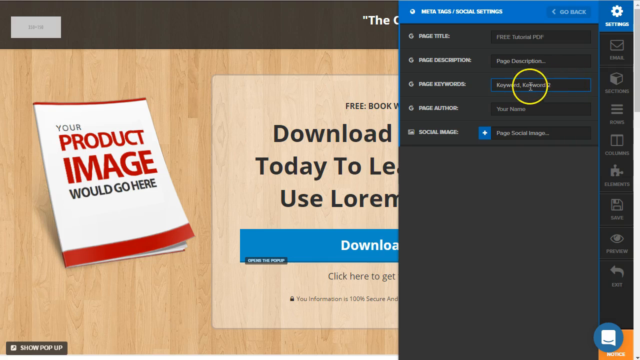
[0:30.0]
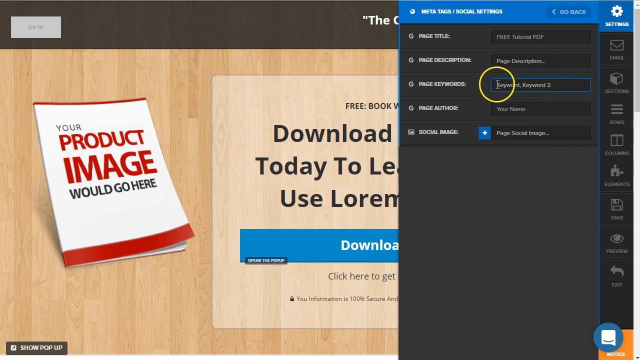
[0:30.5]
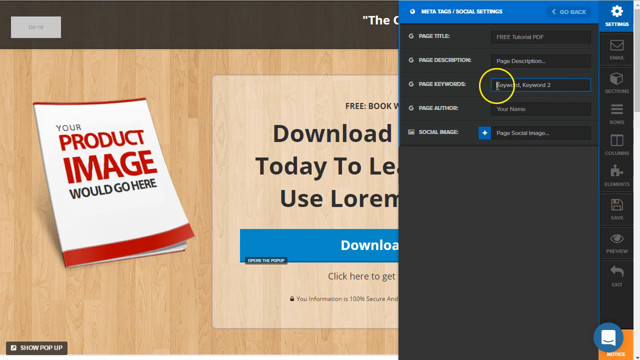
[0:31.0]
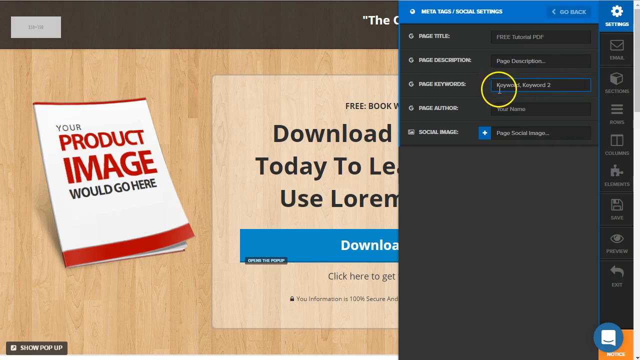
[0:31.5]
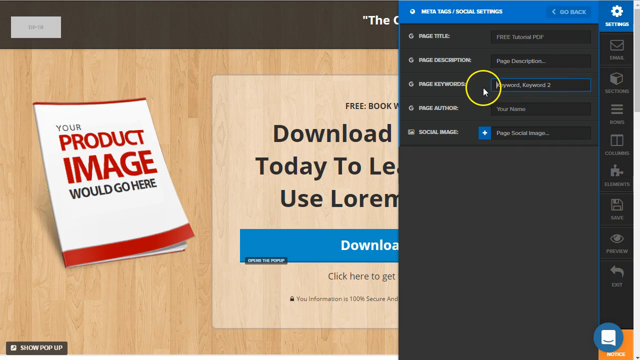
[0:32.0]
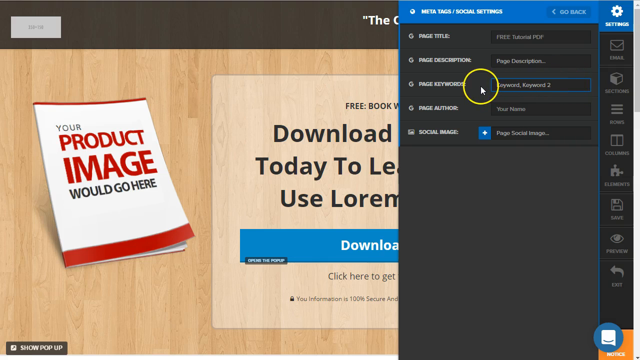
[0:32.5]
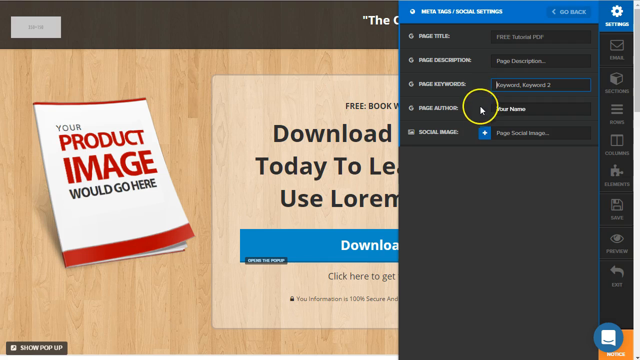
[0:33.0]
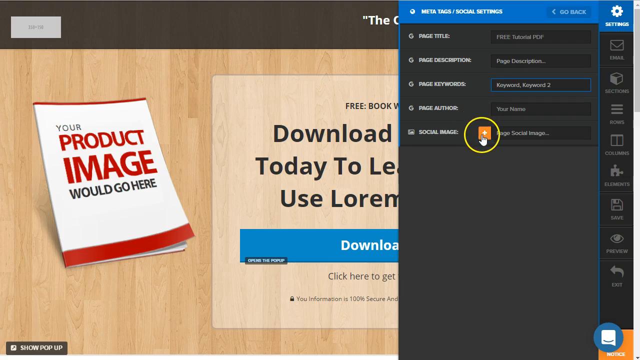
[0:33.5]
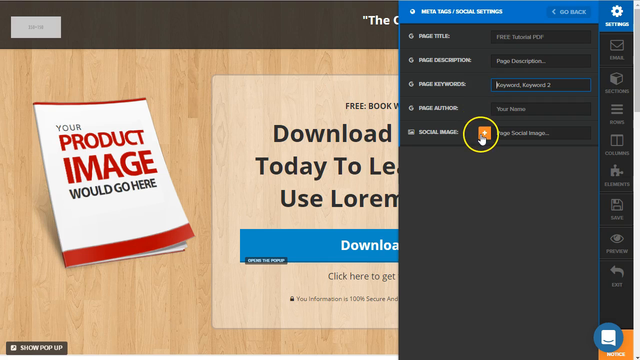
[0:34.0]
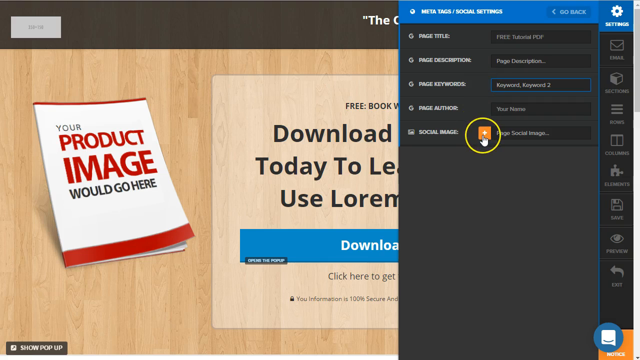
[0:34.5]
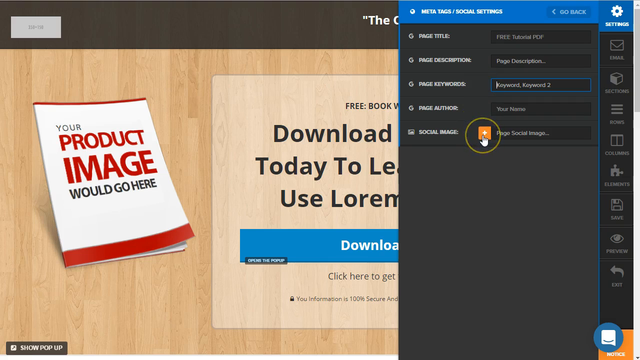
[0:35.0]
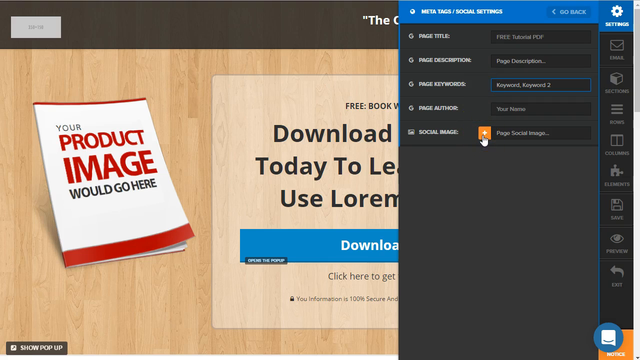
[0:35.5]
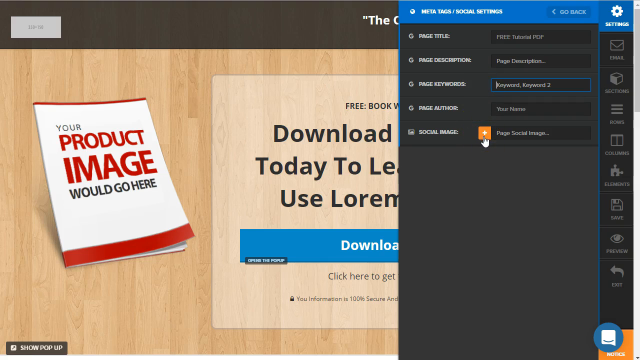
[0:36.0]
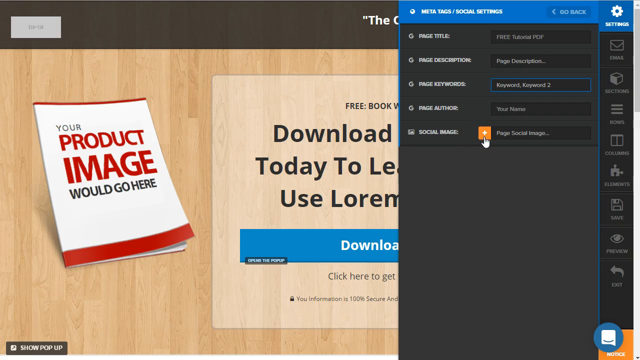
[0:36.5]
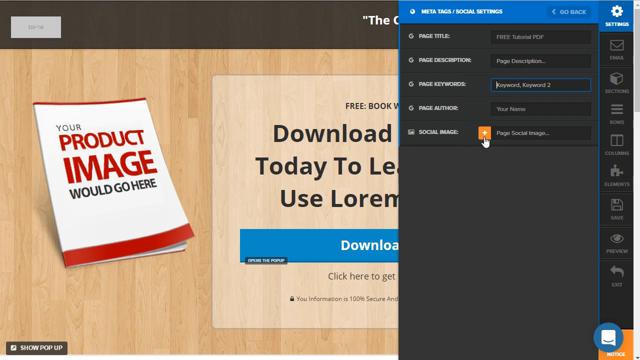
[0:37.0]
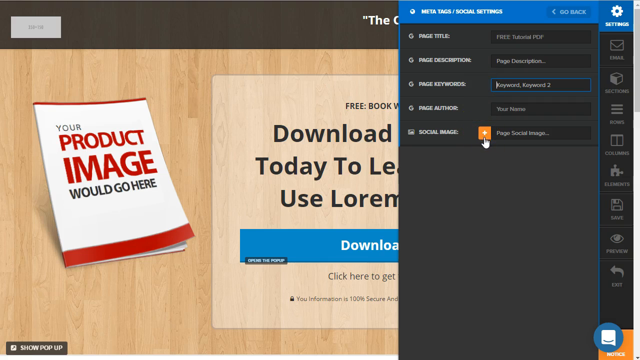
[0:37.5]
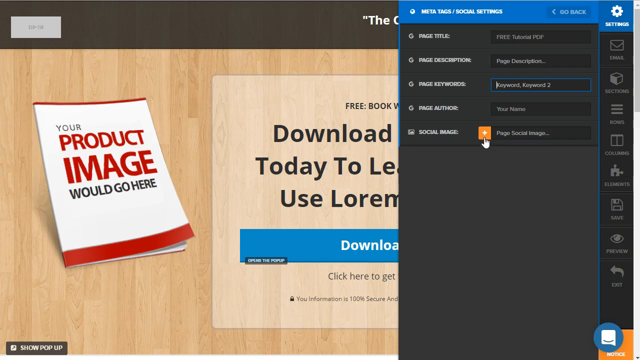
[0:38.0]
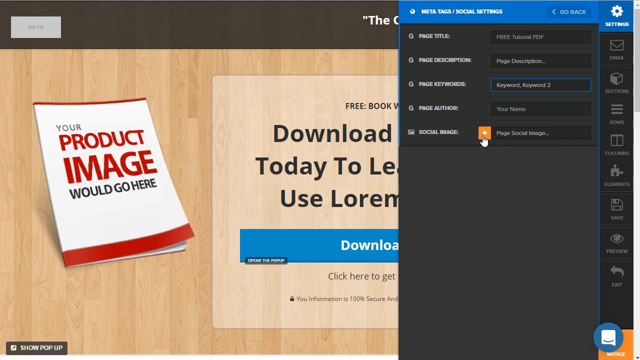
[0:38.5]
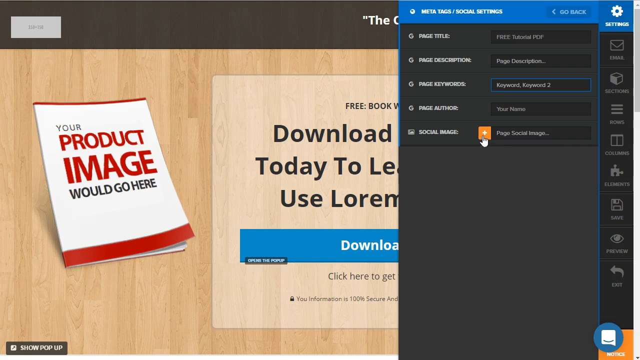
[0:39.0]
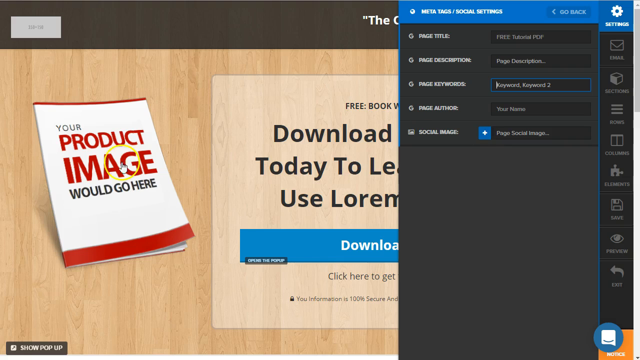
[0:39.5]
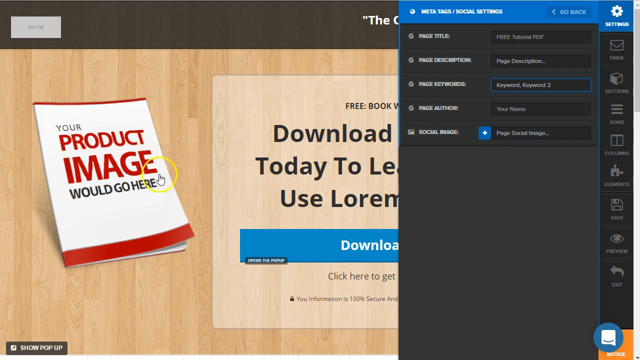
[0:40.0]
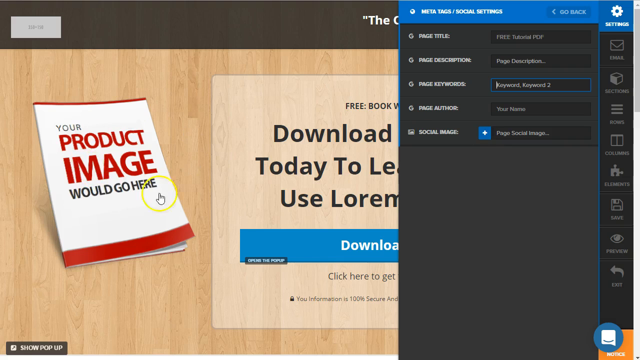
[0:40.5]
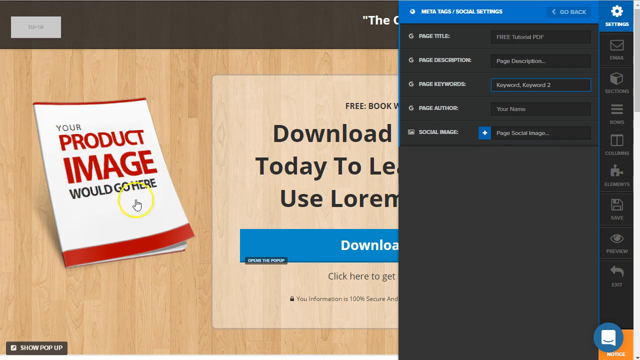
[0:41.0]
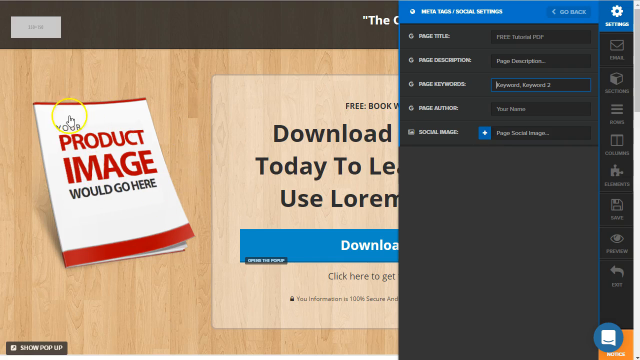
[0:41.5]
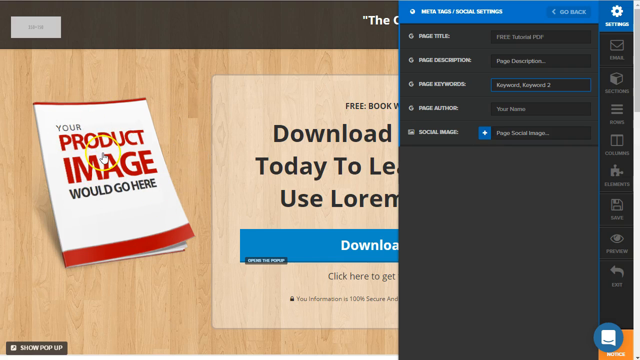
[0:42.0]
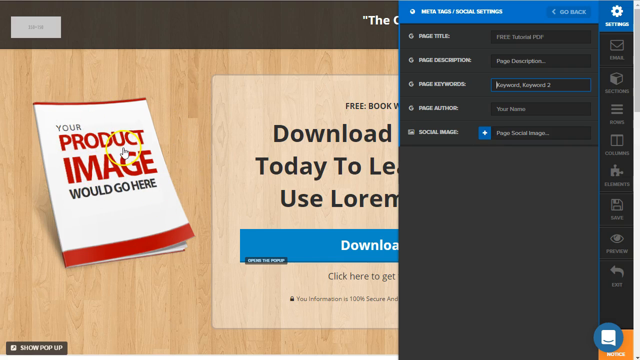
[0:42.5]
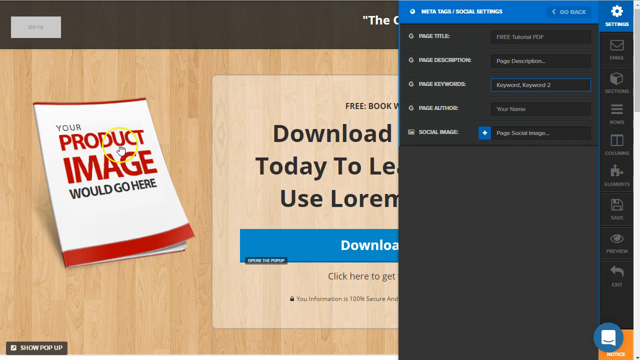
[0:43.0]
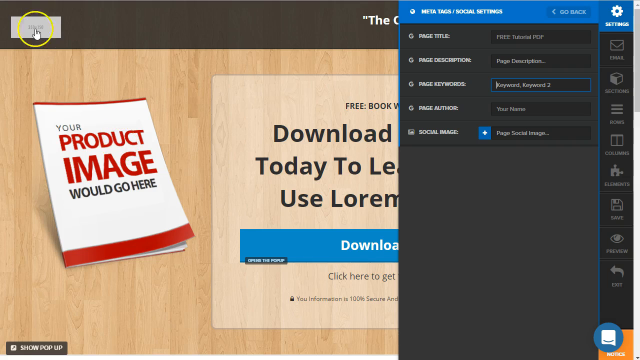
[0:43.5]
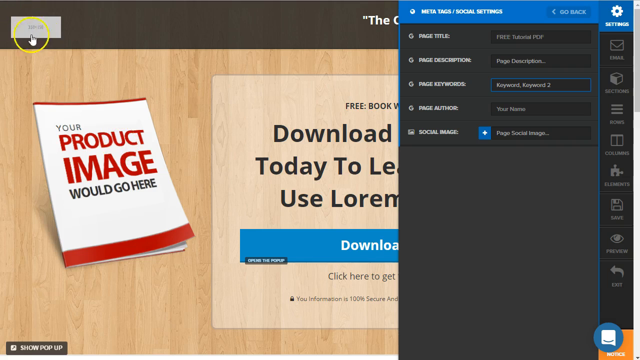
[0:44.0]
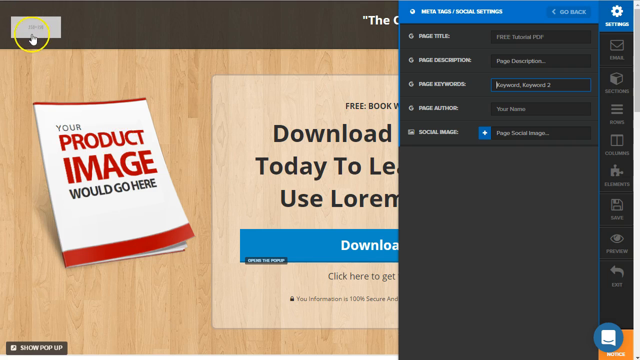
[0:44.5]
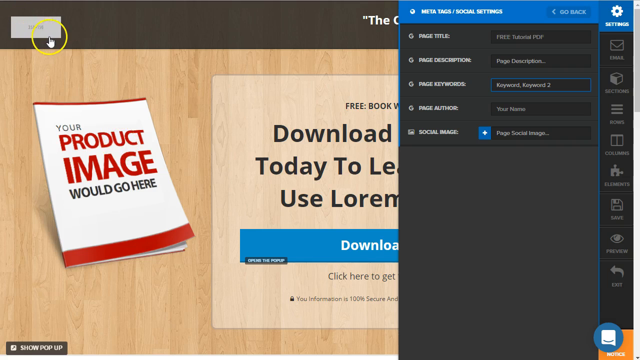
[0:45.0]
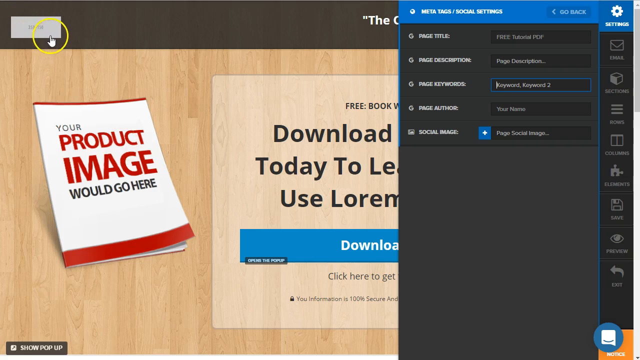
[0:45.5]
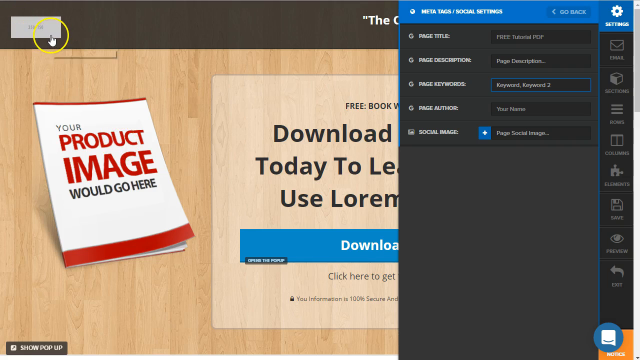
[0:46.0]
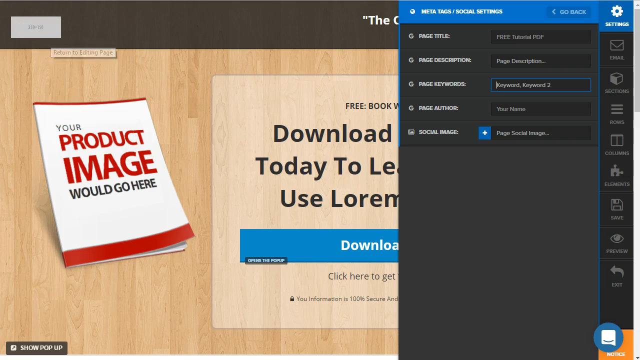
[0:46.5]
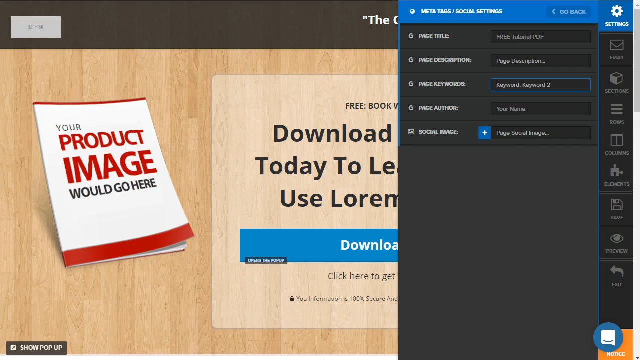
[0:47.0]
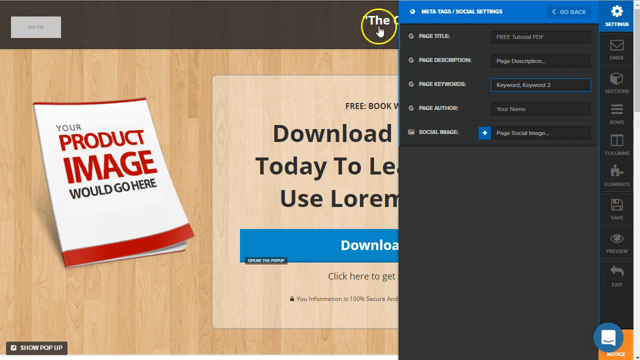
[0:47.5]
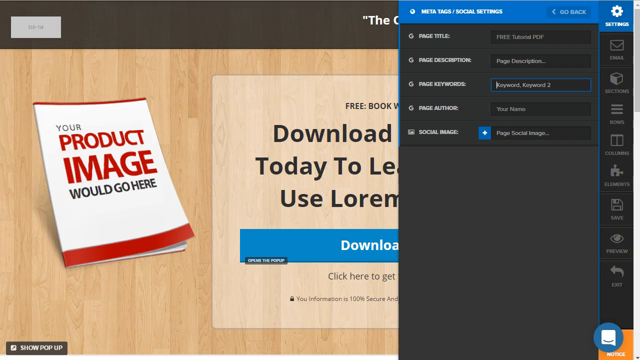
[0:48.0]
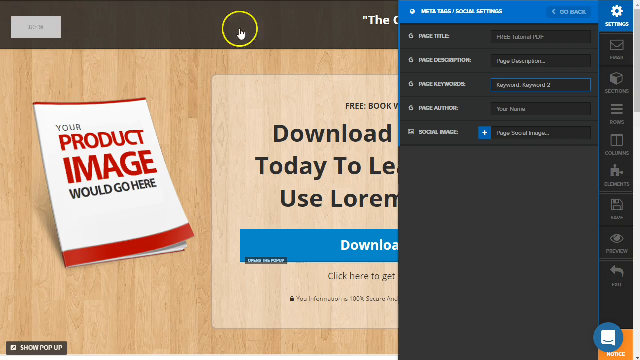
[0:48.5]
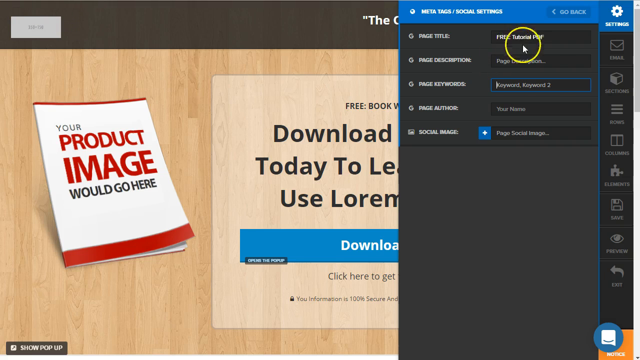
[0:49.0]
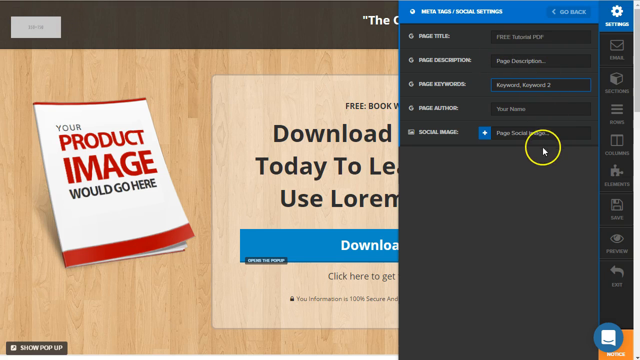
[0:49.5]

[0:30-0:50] A web page says "your product image would go here" and shows a white book with red trim on the top and bottom. It tells how to download a free book to better promote a company, and there is a blue download button. A large yellow circle moves back and forth across the website, as if the user is deciding where to place it, and stops on a category on the right-hand side. A pop-up appears with a blue heading and a list of categories going down to choose from. Other icons run along the right-hand side, very light, almost gray. The website appears to help promote other people's businesses.